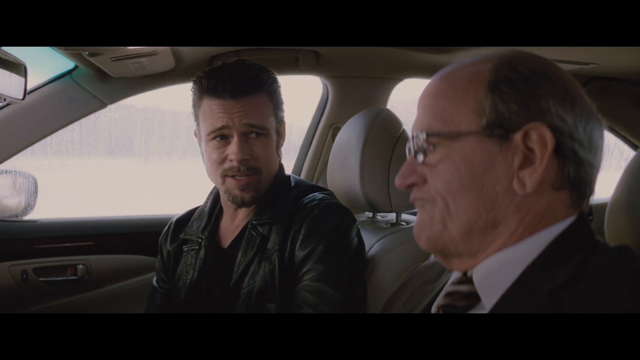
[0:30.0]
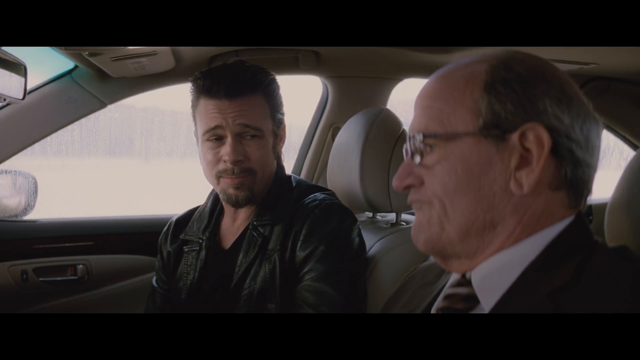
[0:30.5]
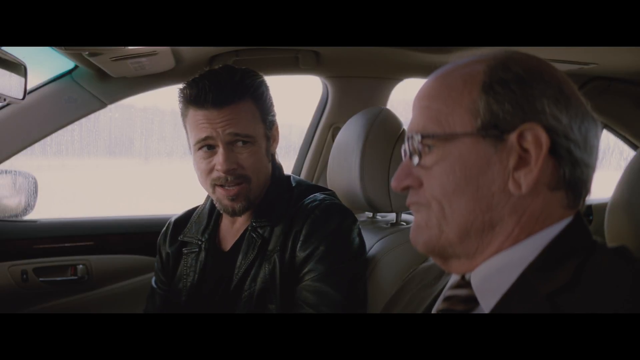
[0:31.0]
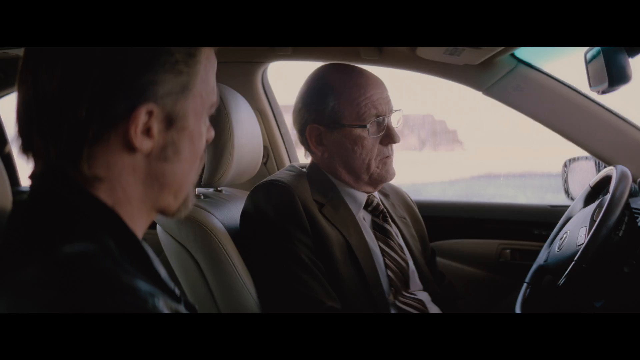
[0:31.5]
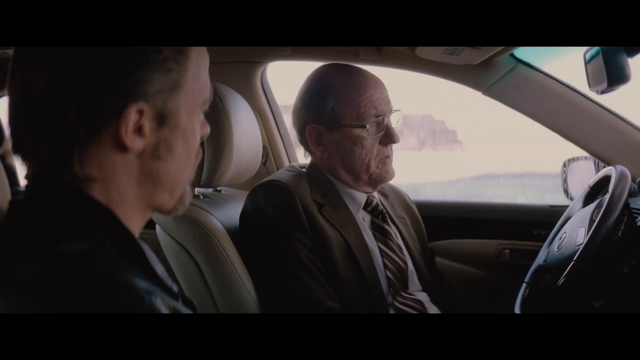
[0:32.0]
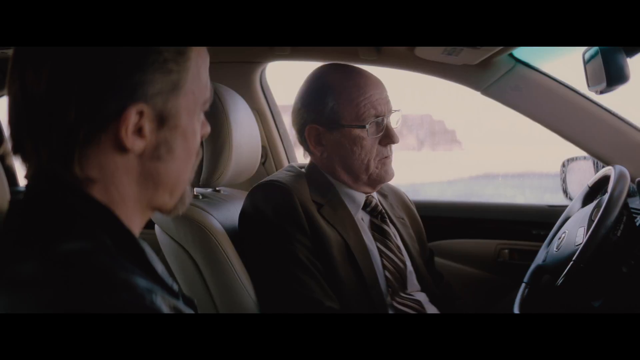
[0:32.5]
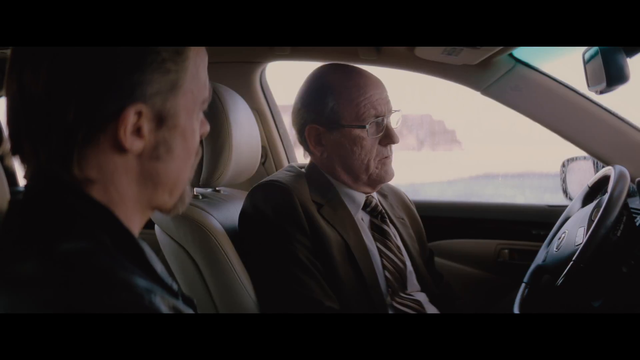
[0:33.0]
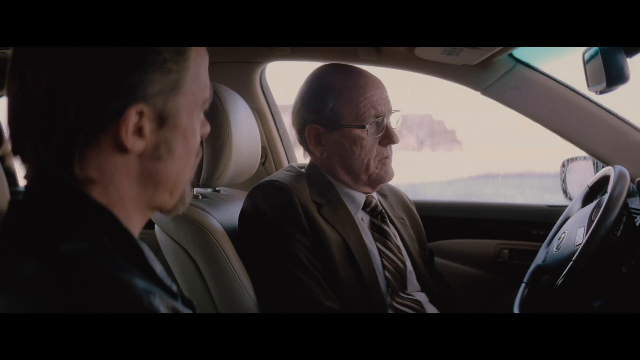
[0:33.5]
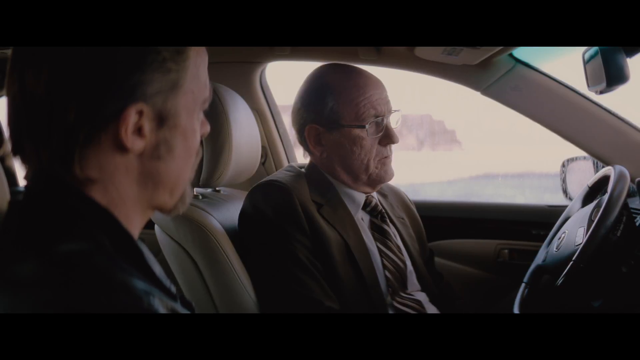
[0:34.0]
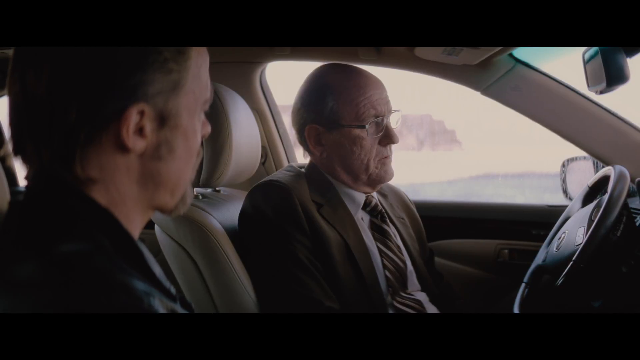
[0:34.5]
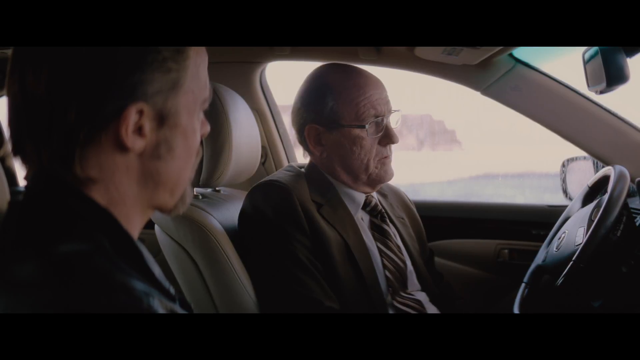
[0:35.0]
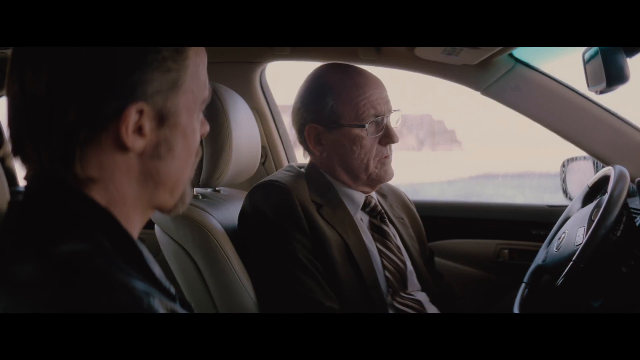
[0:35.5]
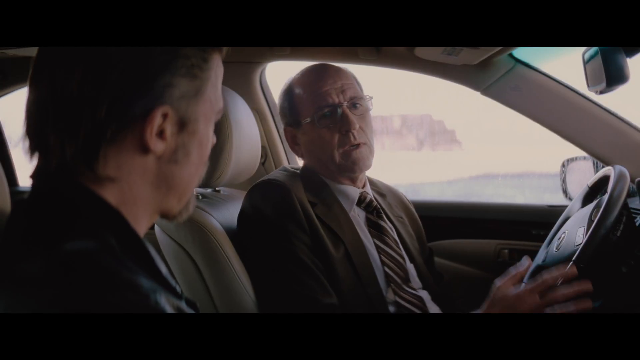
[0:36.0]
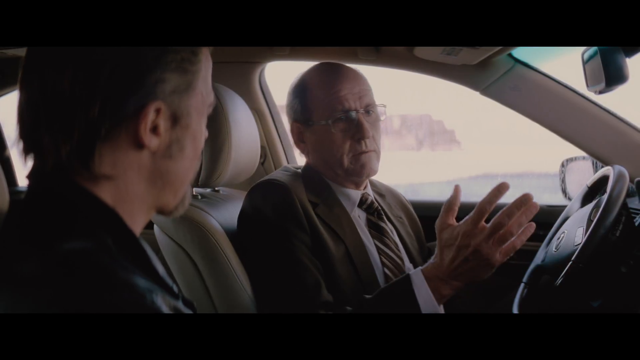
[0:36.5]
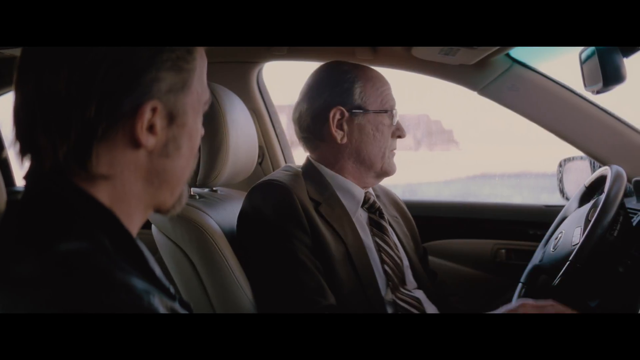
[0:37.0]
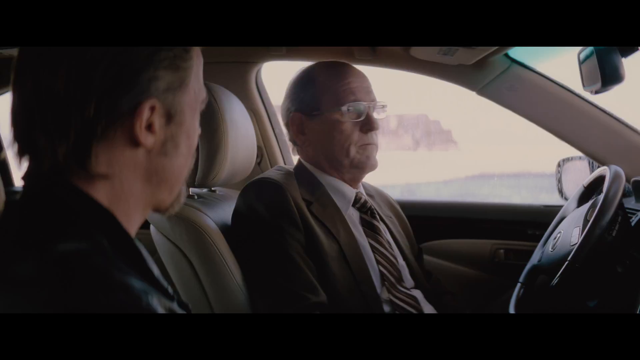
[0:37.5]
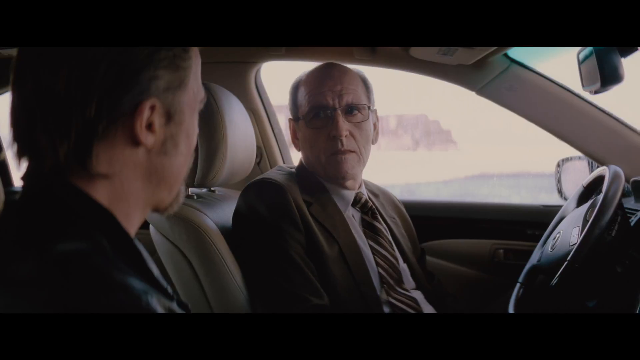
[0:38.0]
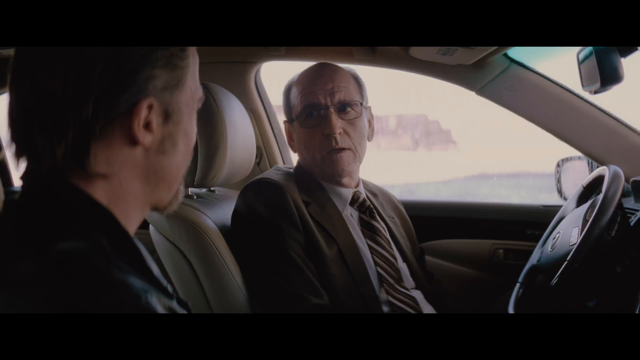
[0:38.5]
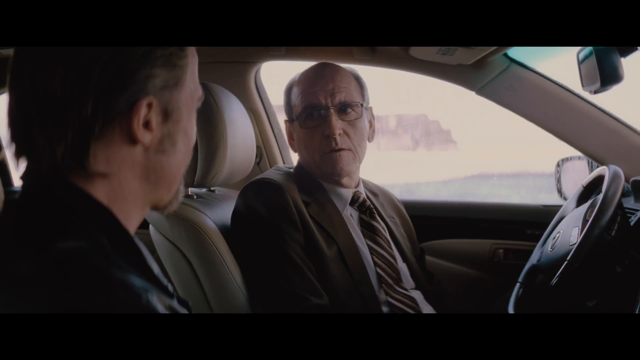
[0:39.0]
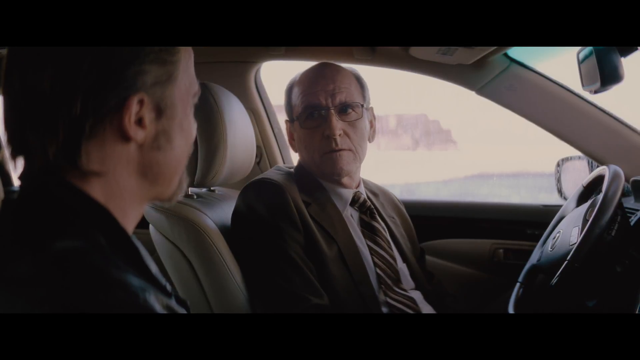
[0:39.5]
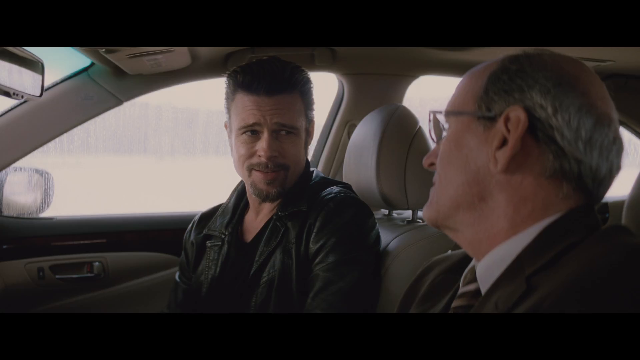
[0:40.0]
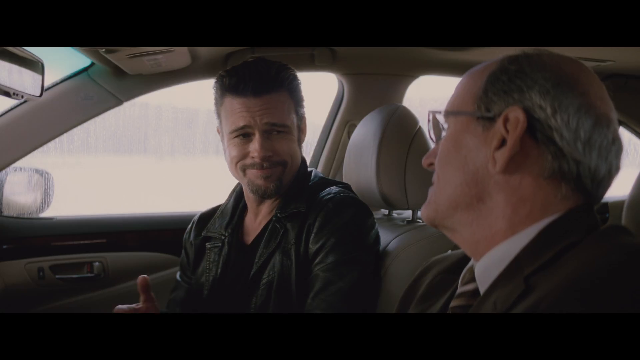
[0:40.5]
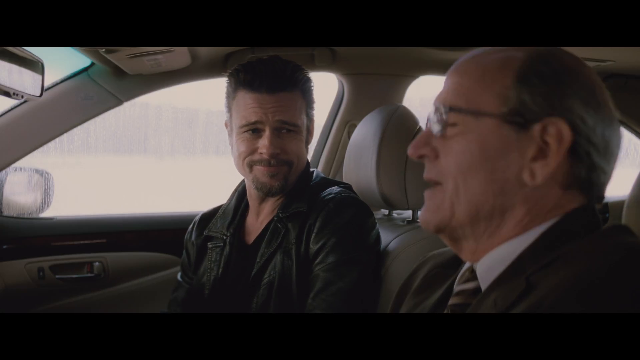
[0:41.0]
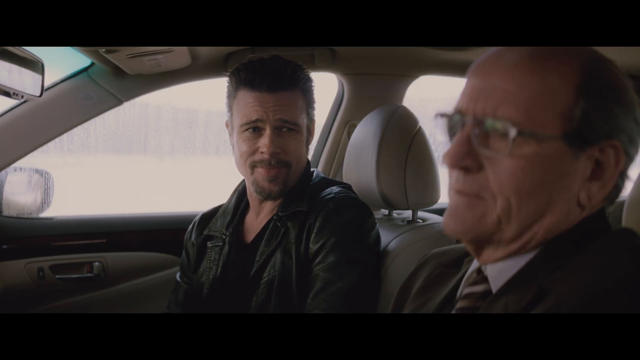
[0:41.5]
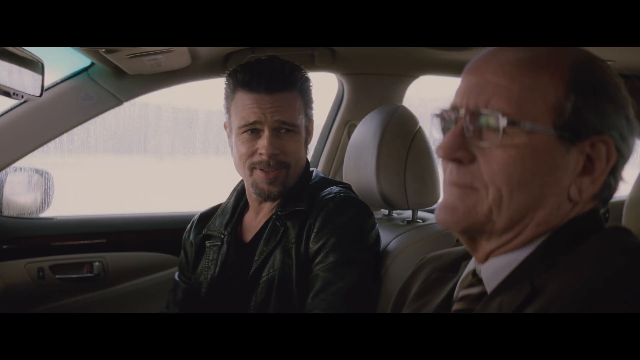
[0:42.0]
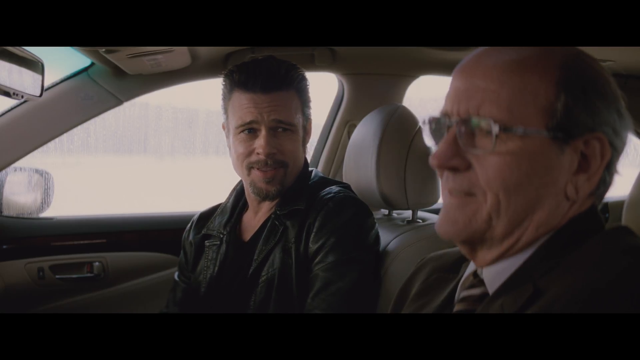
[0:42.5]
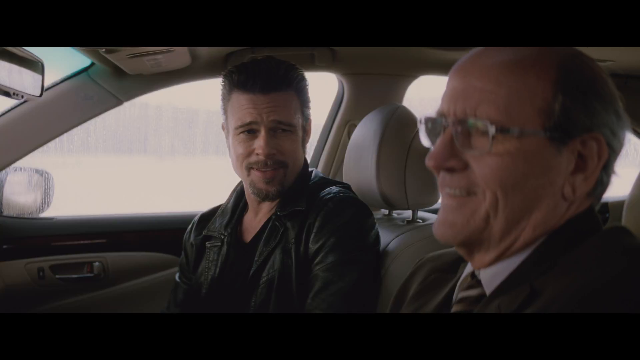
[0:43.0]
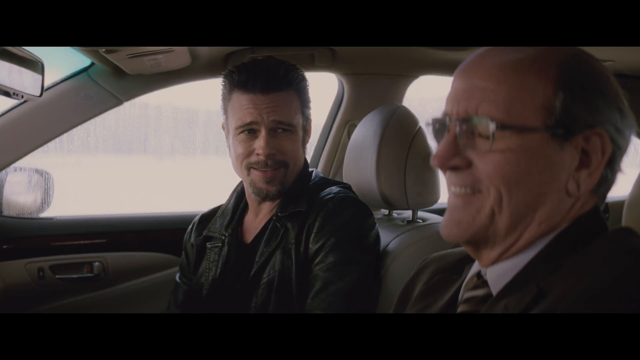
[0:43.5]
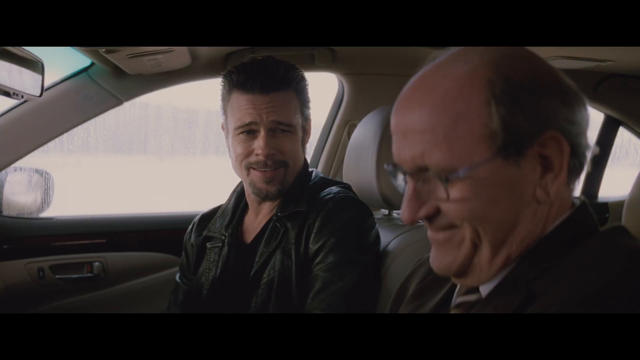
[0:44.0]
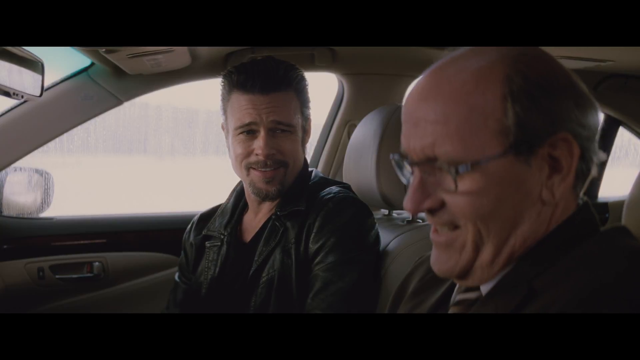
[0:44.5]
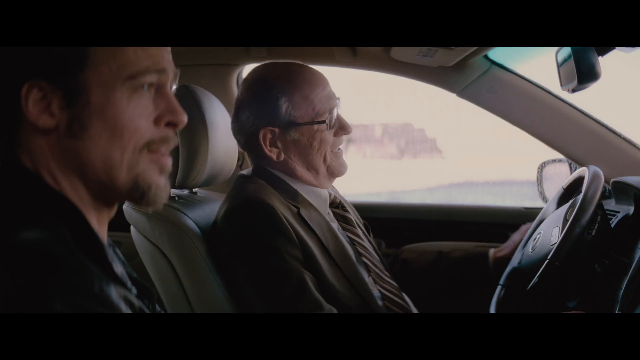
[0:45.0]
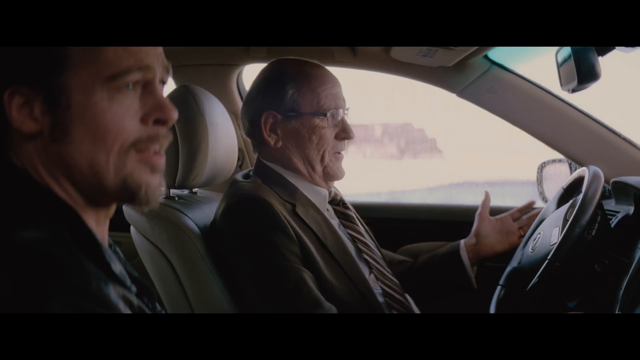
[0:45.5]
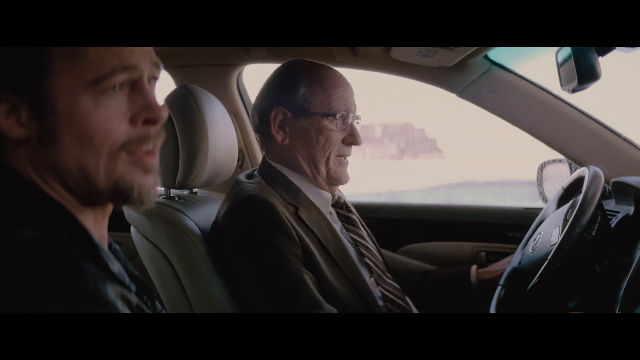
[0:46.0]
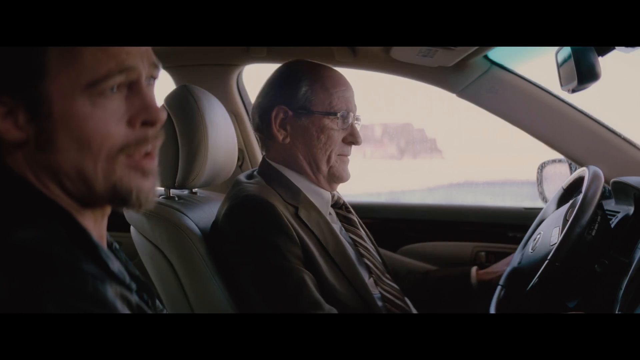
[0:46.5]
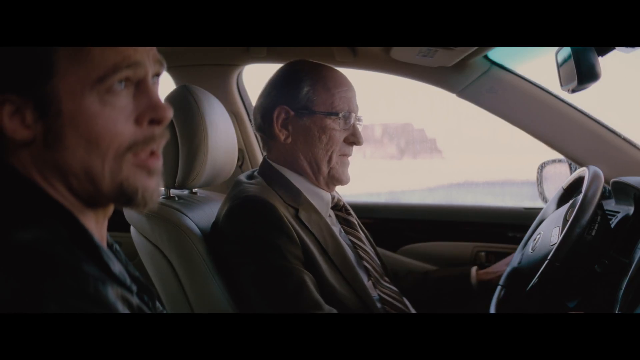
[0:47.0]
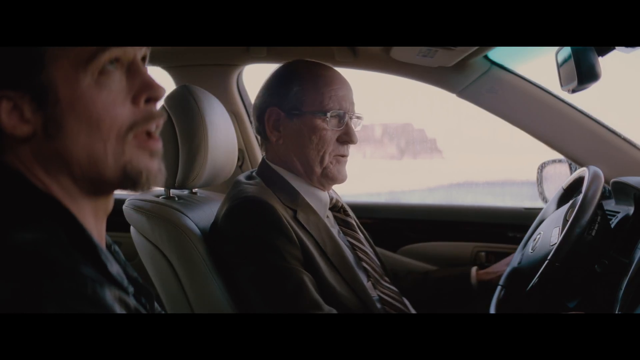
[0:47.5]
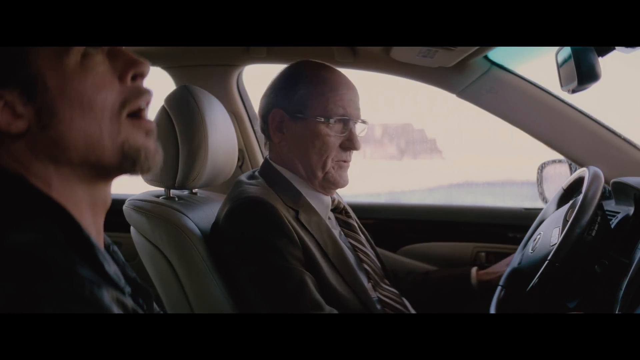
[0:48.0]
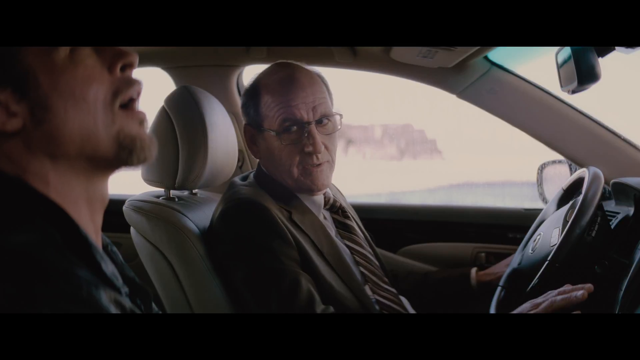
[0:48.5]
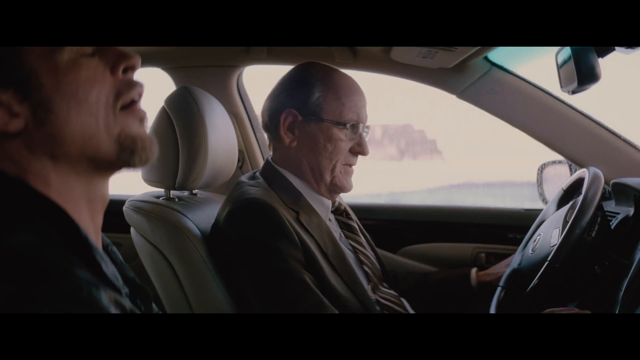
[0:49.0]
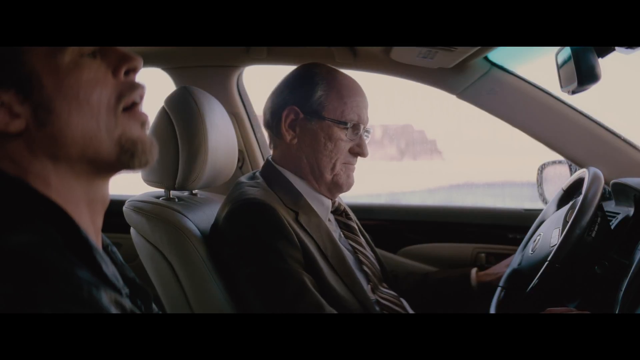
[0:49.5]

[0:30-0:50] Two men in a car seem to be talking to each other. A man in a black biker-style jacket, who seems to be Brad Pitt, looks at an older man in what looks like a dark brown suit and a striped tie. The older man wears glasses and is in the driver's seat, with the wheel in front of him. He stares for a second, then raises his right hand a bit in a gesture and looks over at Brad Pitt, apparently waiting for an answer. Brad Pitt grimaces a little, and the older man, not looking very happy, looks away. He then starts to smile to himself, sort of laughing and nodding his head, gestures with his left hand in an open gesture, and looks at Brad Pitt again. The car interior is beige-like, the rear view mirror is in the top right corner, and the sky outside looks very blown out, so little can be seen outside.